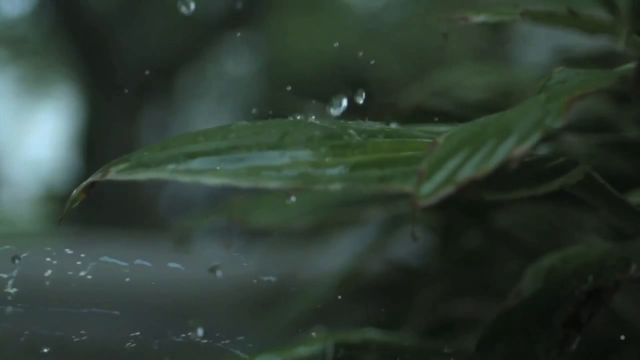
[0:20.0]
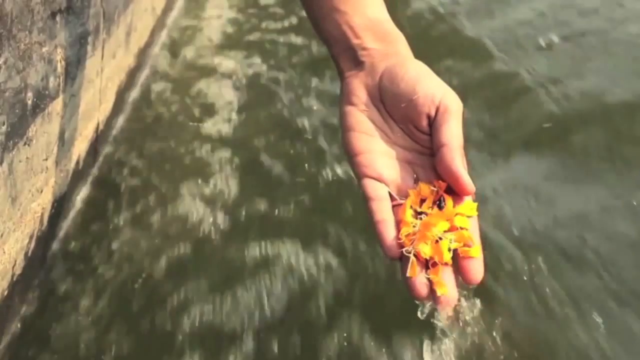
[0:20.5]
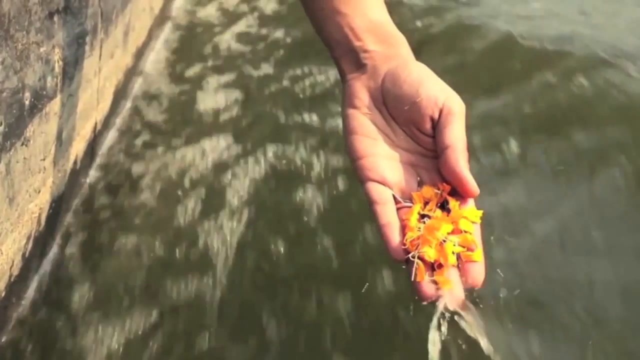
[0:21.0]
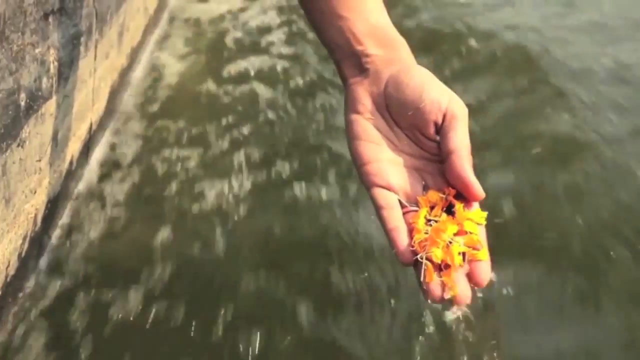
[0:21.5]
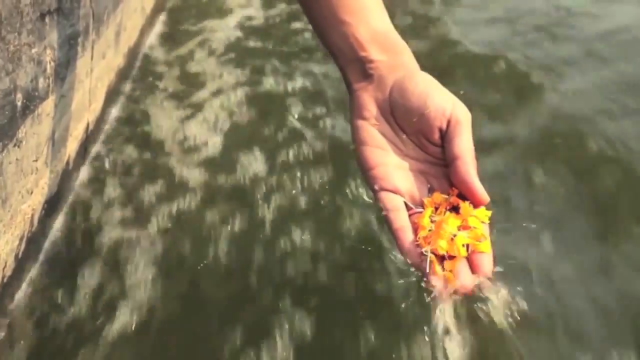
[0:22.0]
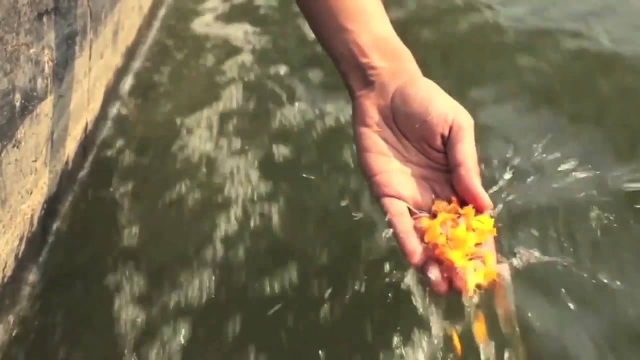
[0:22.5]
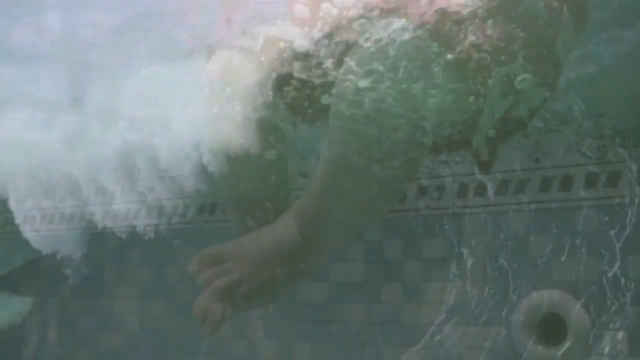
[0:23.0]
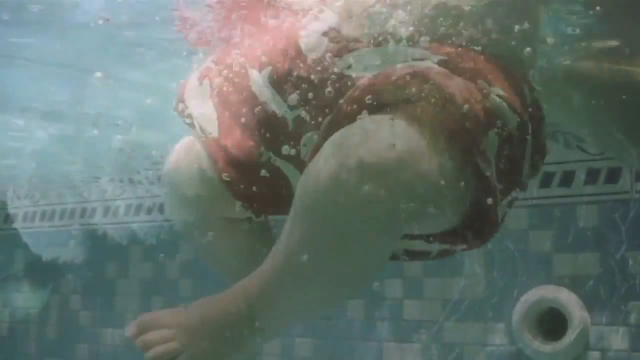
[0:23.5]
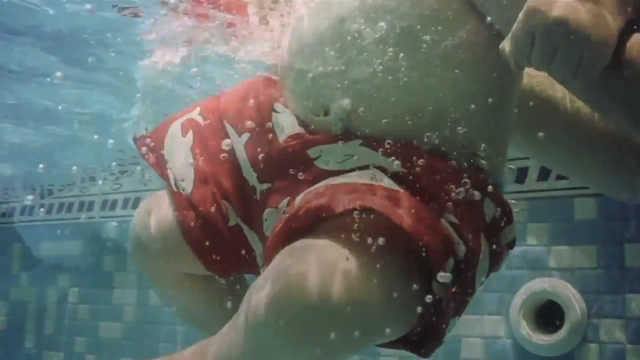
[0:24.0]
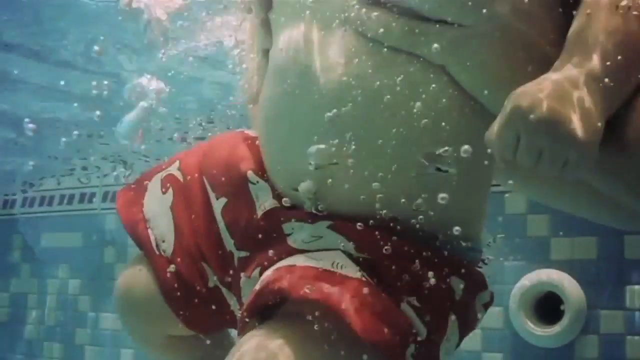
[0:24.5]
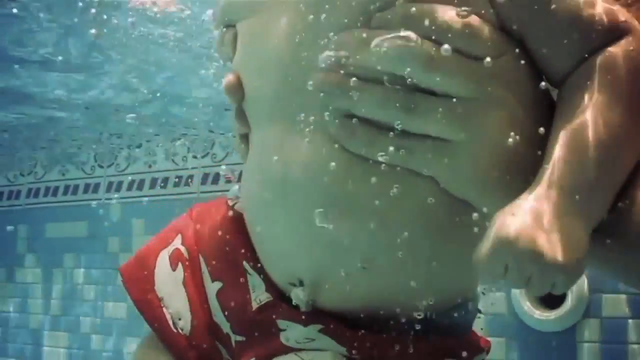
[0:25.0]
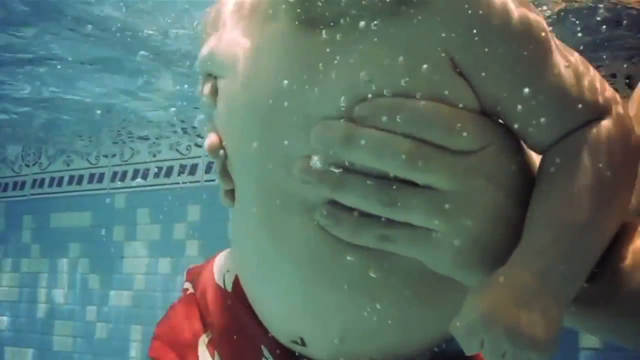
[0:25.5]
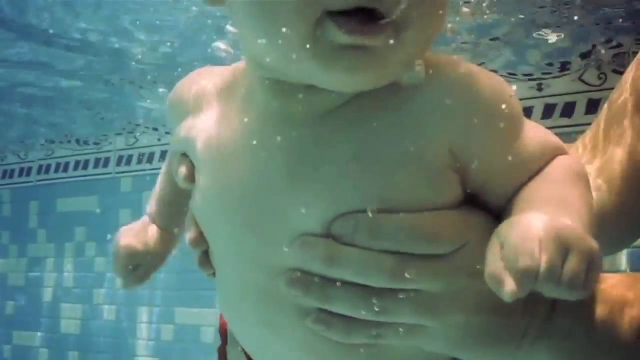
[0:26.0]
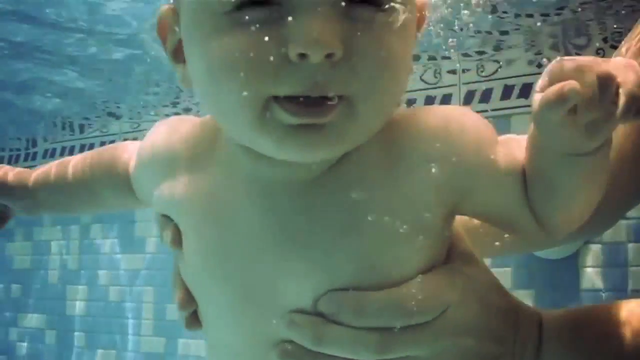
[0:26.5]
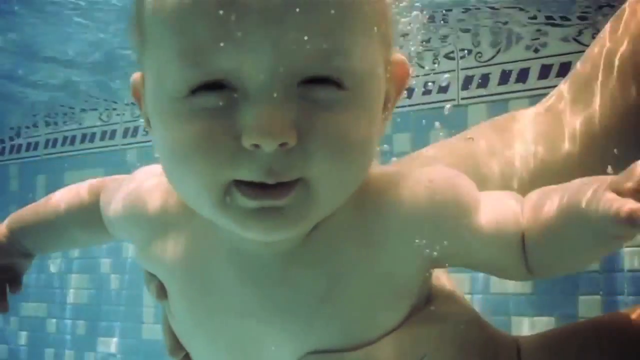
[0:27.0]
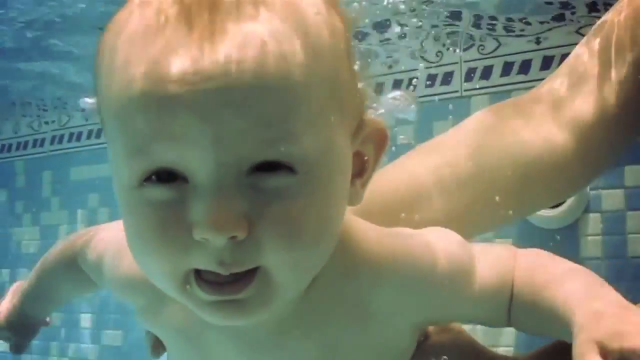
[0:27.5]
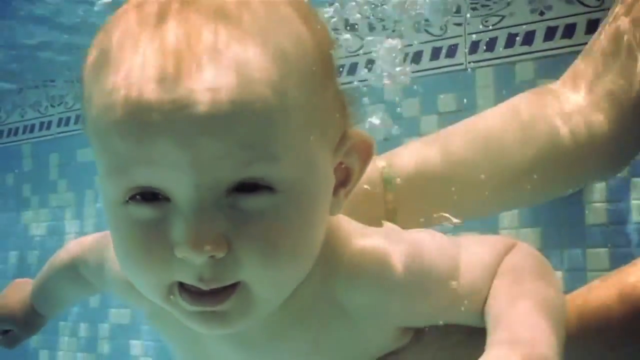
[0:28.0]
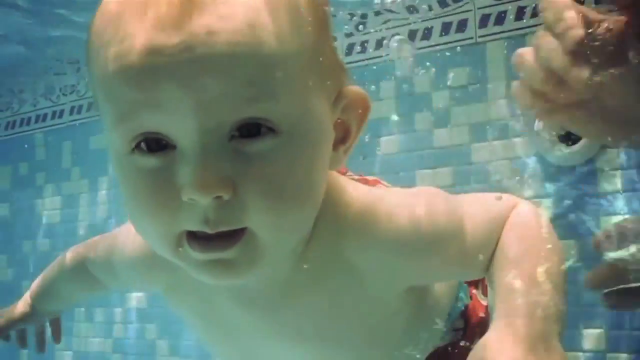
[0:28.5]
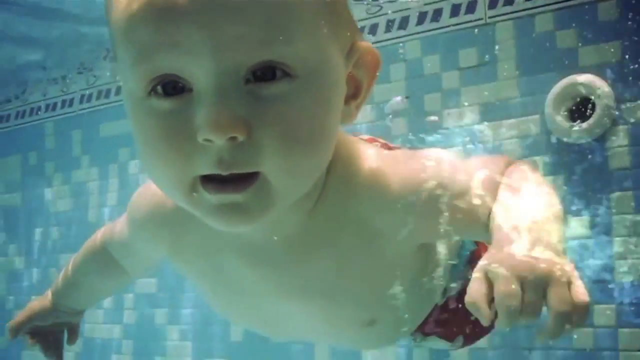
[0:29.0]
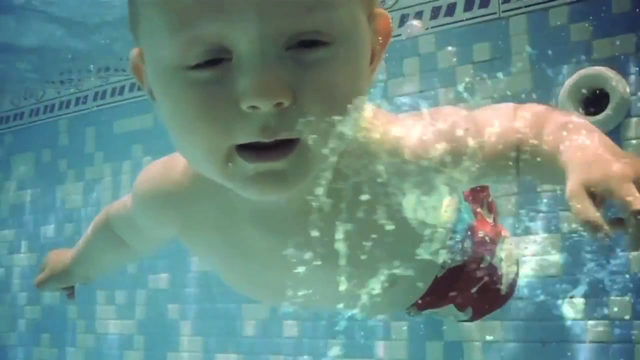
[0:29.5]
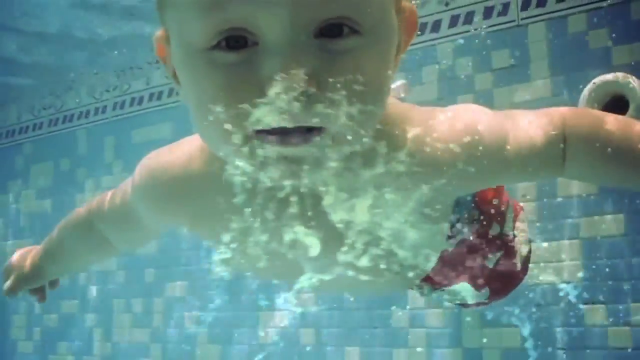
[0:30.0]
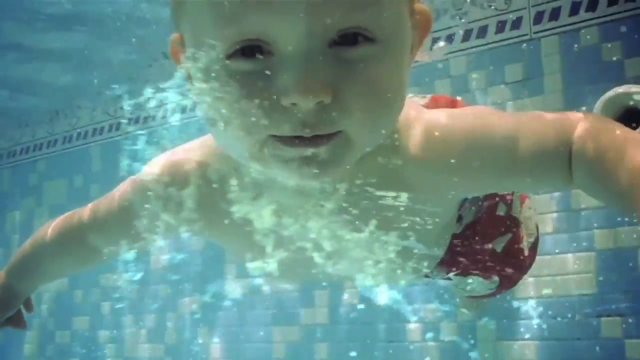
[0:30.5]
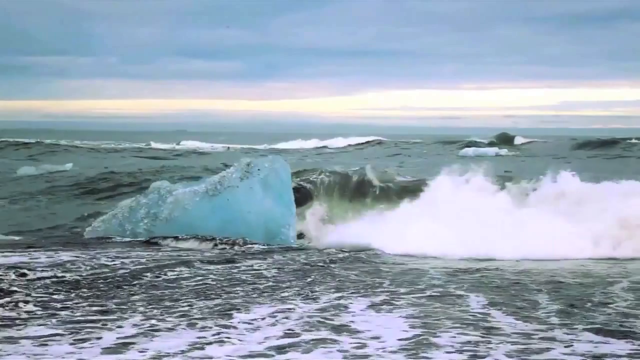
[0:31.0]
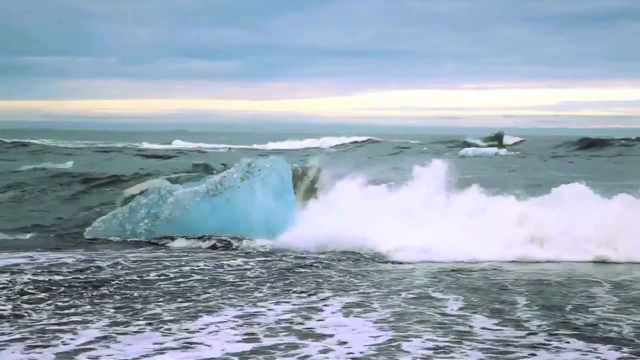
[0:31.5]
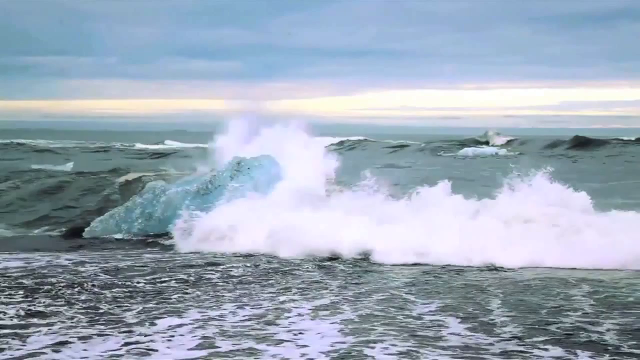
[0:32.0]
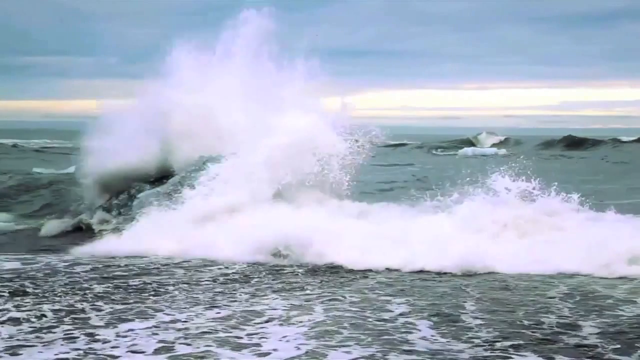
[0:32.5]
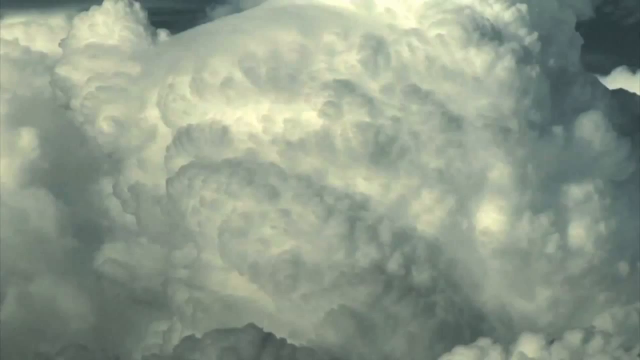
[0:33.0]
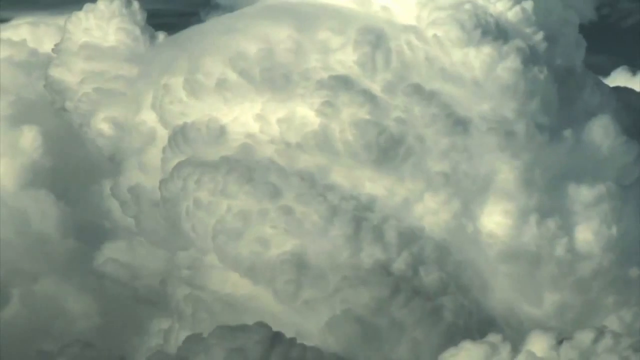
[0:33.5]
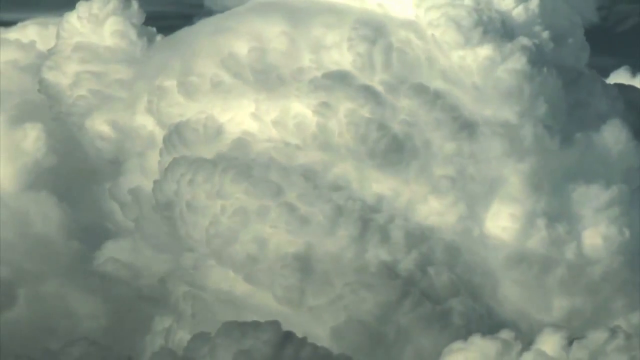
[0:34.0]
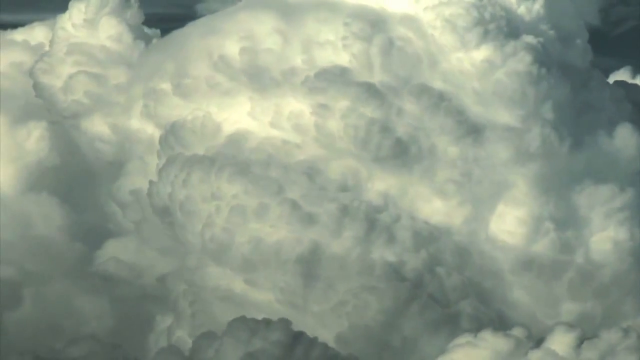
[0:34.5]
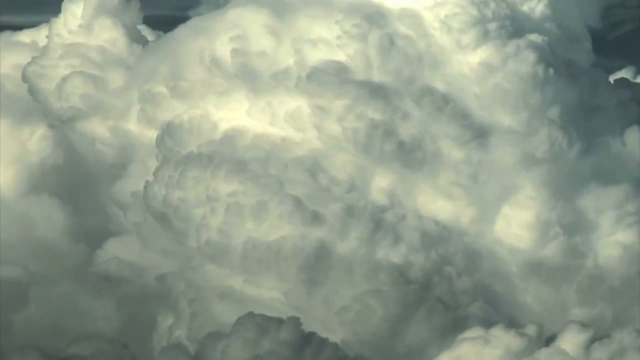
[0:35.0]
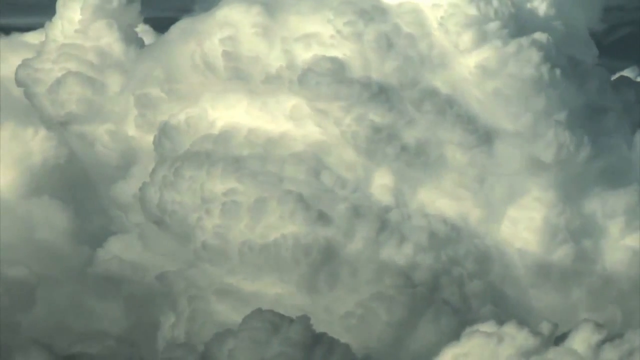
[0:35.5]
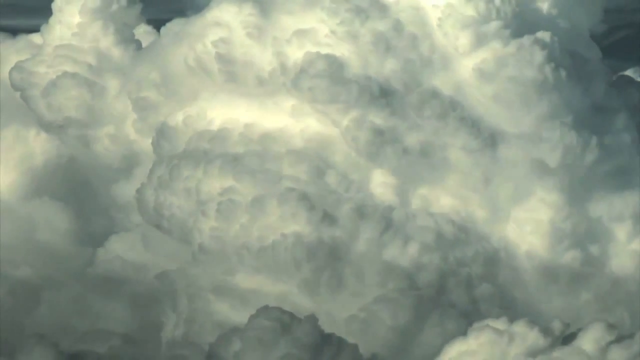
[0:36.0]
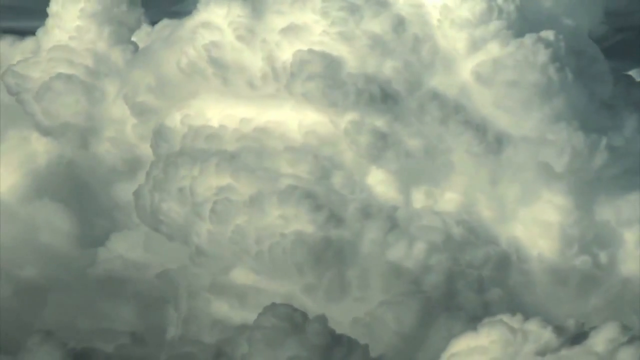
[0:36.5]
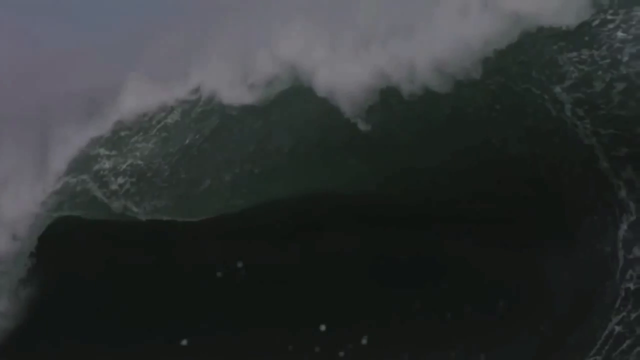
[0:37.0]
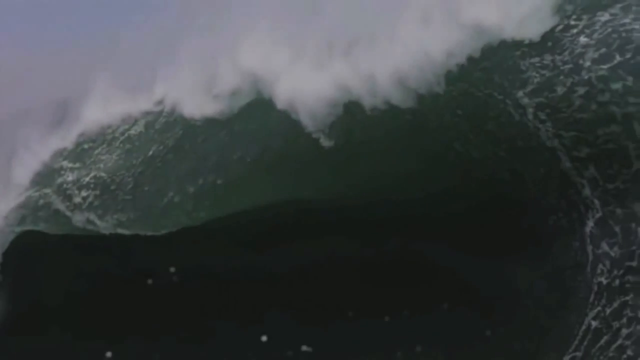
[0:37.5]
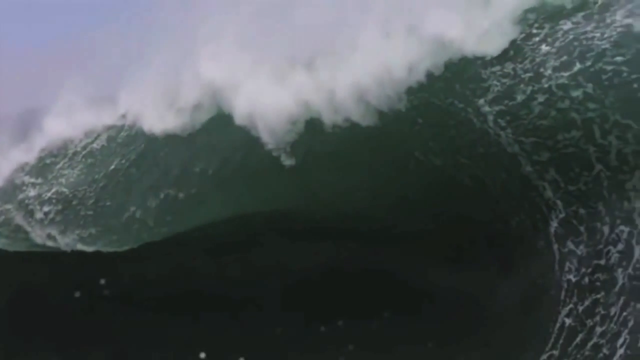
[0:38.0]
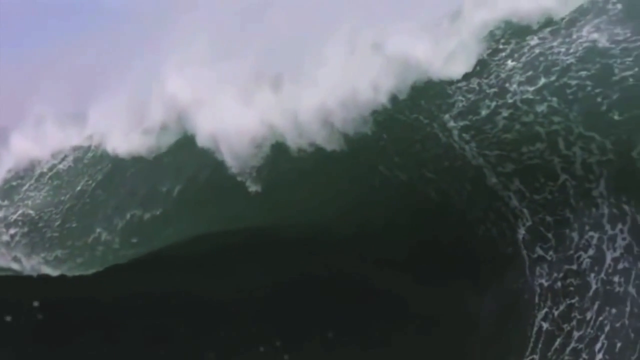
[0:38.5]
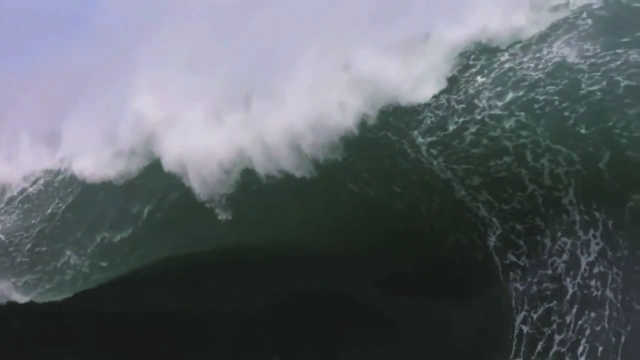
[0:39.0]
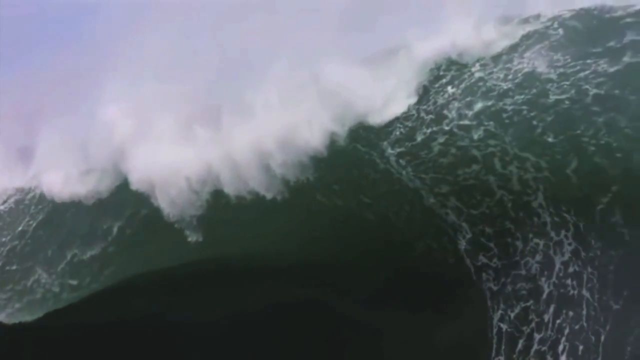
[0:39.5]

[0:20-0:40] Water droplets continue to fall in slow motion onto a green leaf. The scene changes to a body of water where a hand holding flowers is put near the water, and the flowers flow out of the hand and go with the water. Next is a swimming pool in which a very young boy wearing a red swimsuit is swimming.